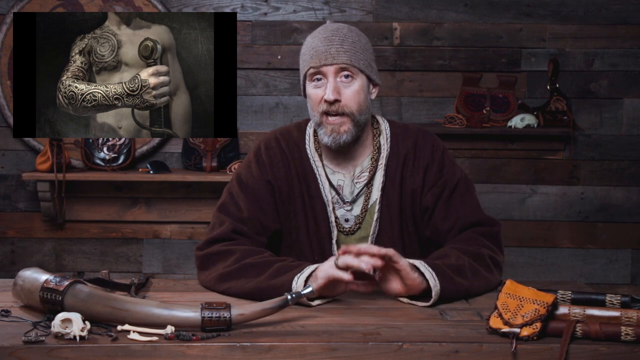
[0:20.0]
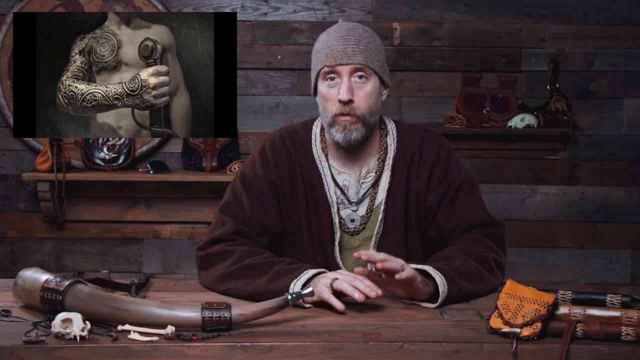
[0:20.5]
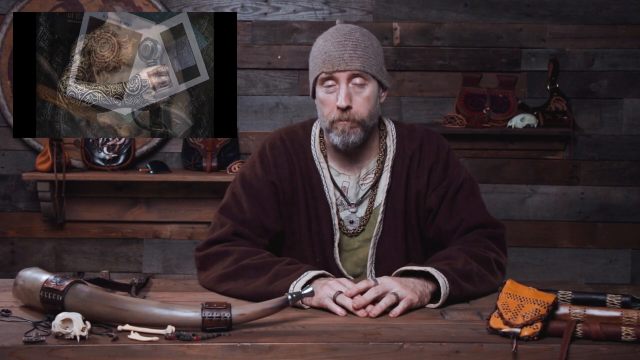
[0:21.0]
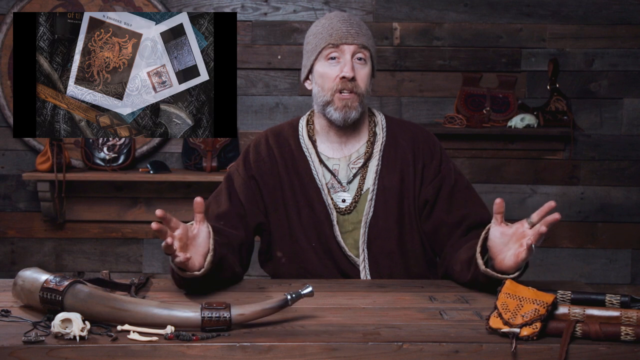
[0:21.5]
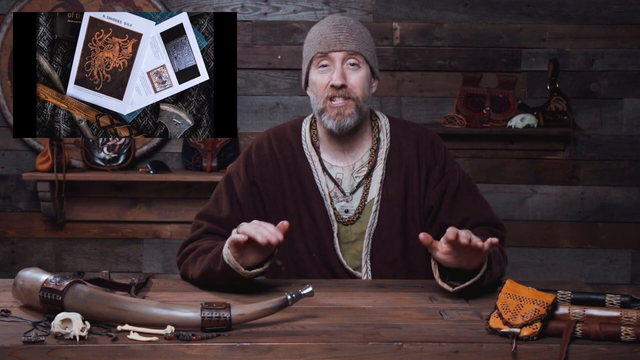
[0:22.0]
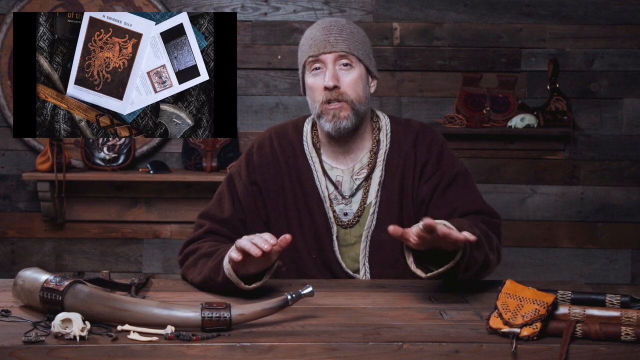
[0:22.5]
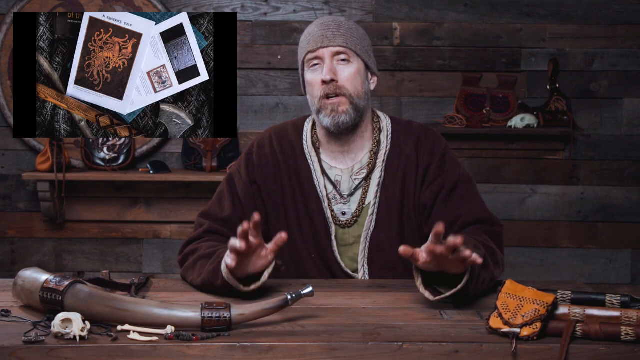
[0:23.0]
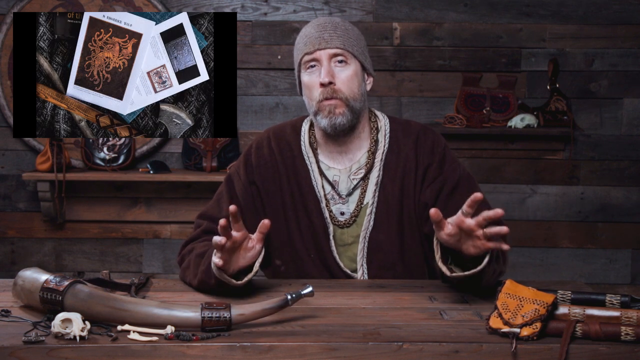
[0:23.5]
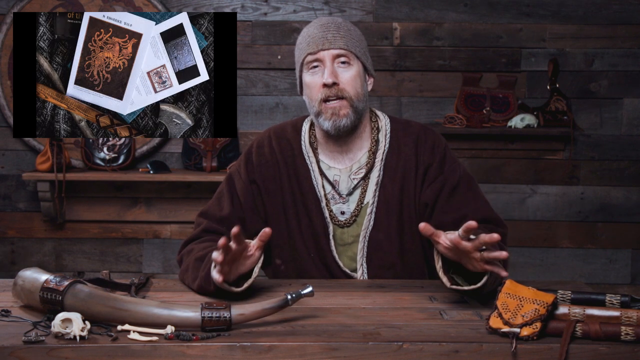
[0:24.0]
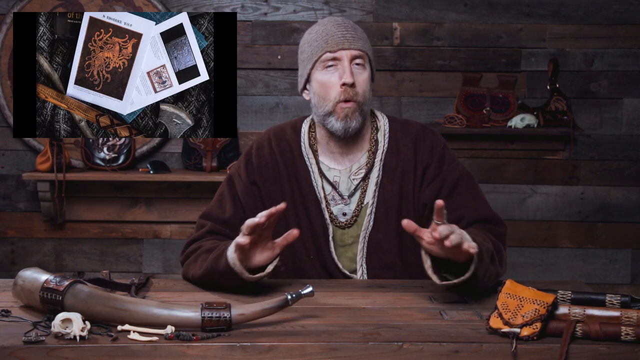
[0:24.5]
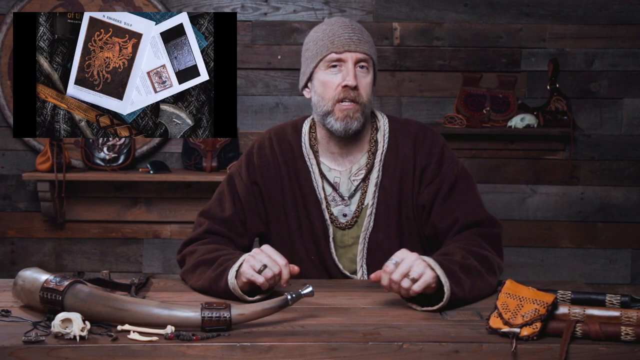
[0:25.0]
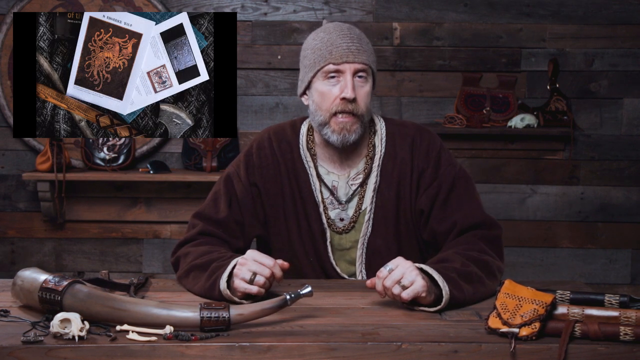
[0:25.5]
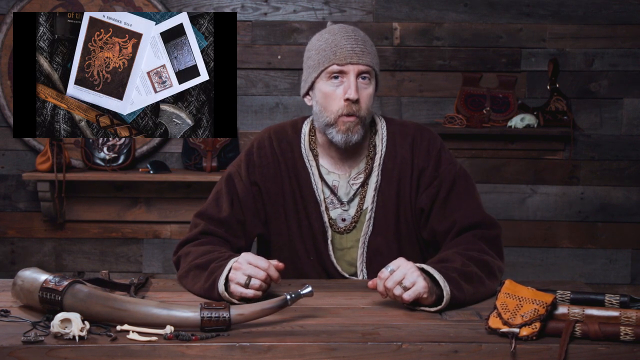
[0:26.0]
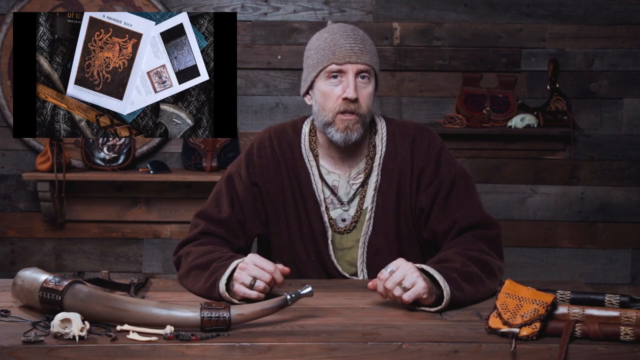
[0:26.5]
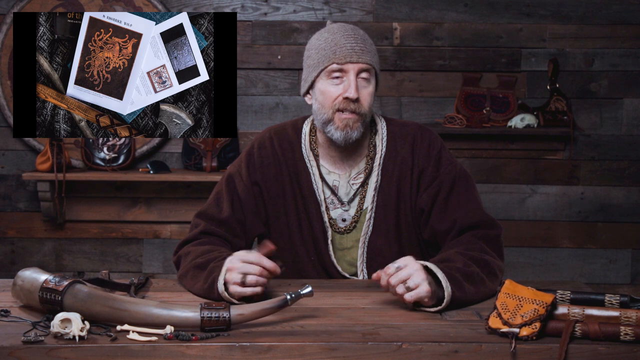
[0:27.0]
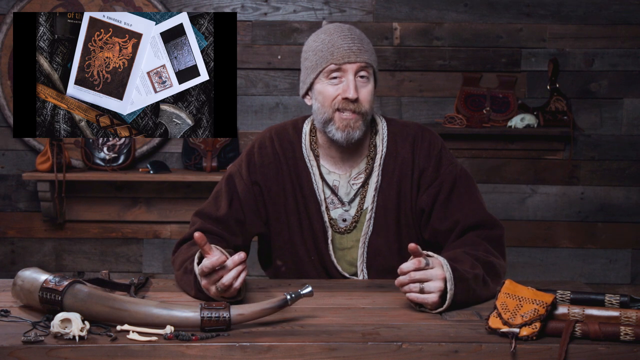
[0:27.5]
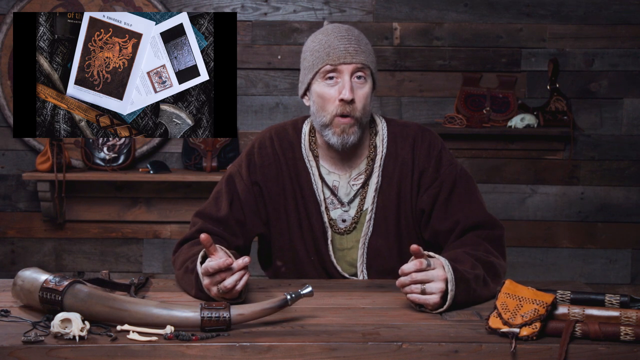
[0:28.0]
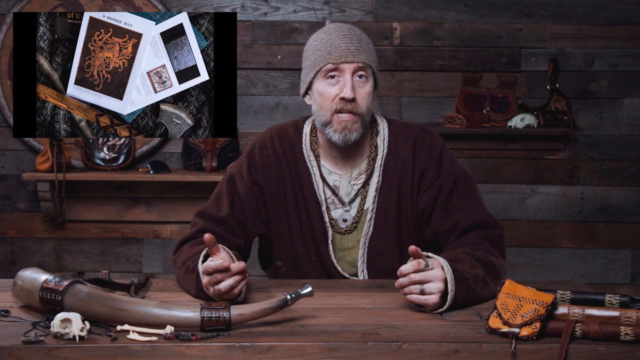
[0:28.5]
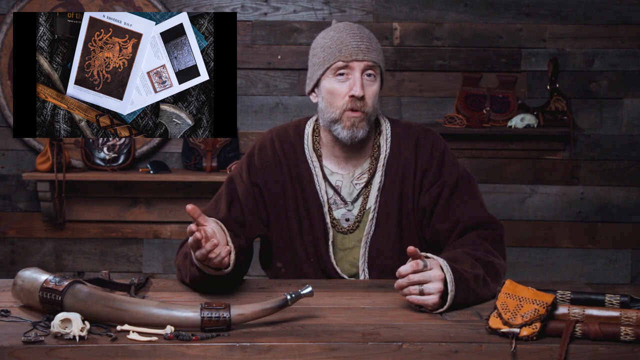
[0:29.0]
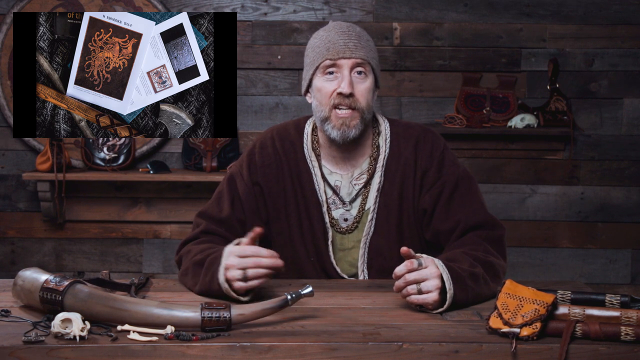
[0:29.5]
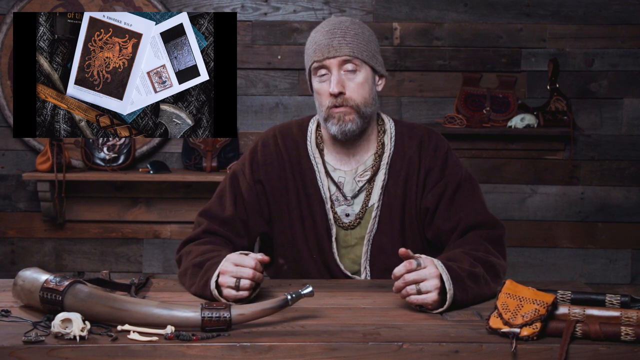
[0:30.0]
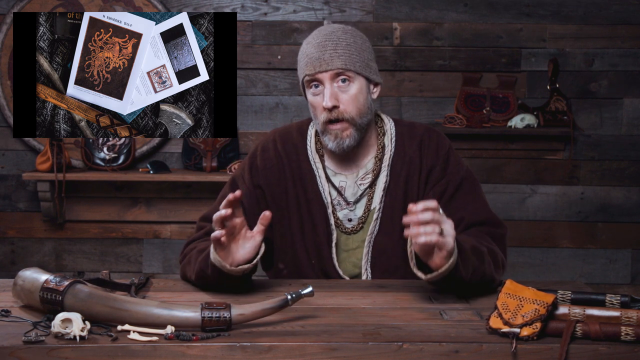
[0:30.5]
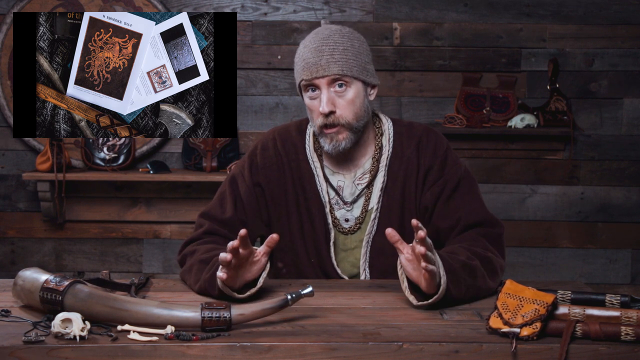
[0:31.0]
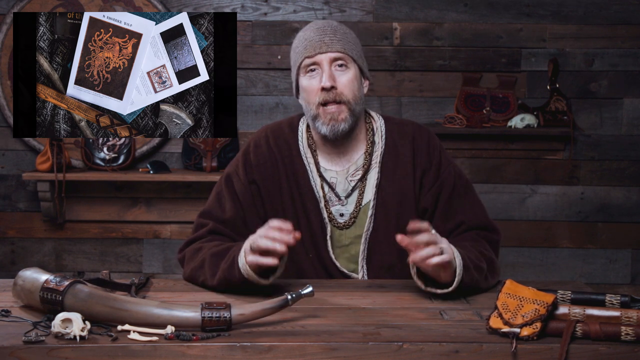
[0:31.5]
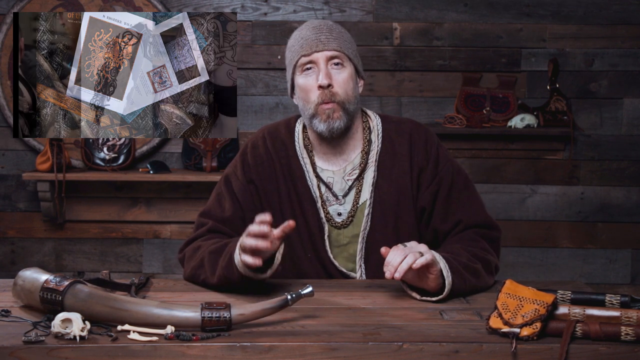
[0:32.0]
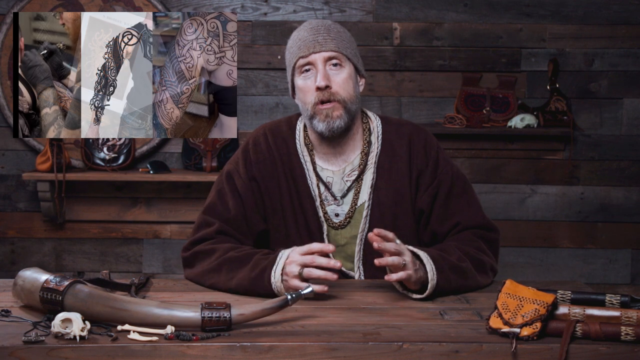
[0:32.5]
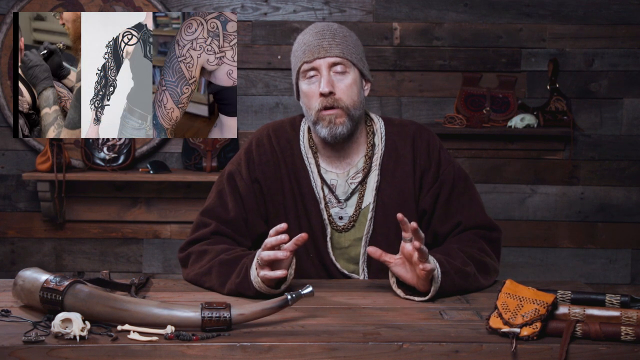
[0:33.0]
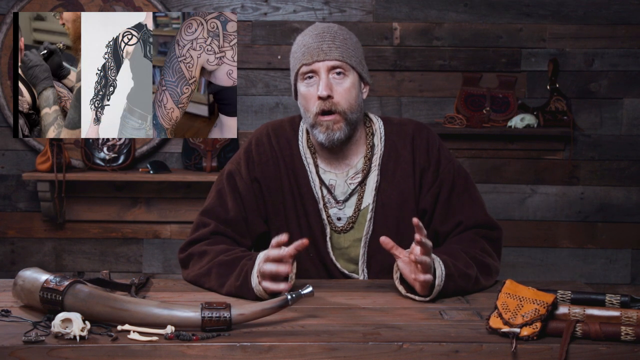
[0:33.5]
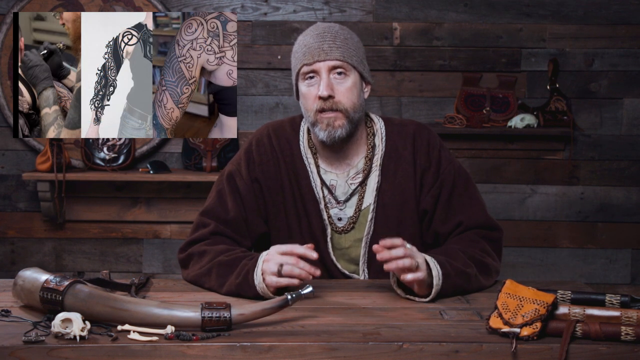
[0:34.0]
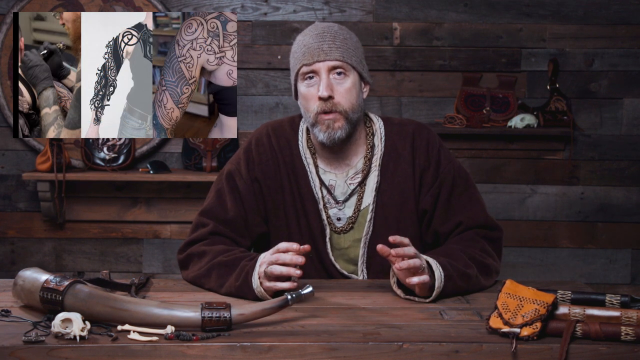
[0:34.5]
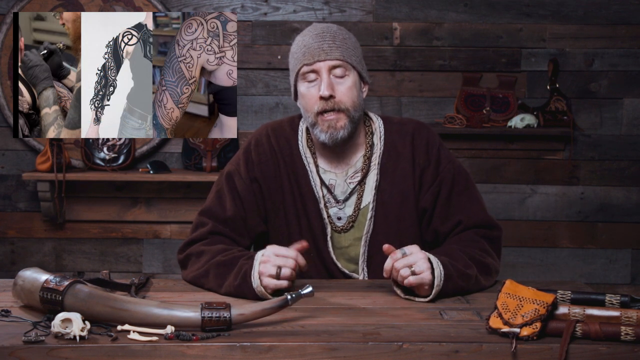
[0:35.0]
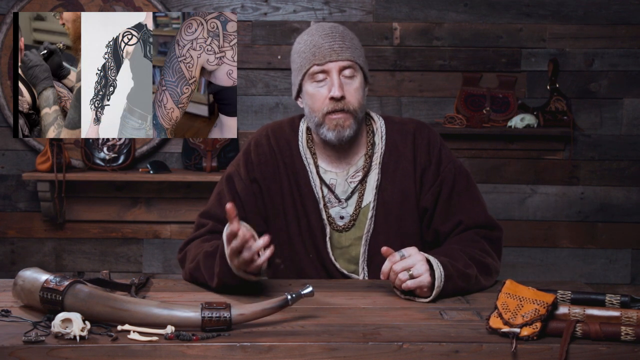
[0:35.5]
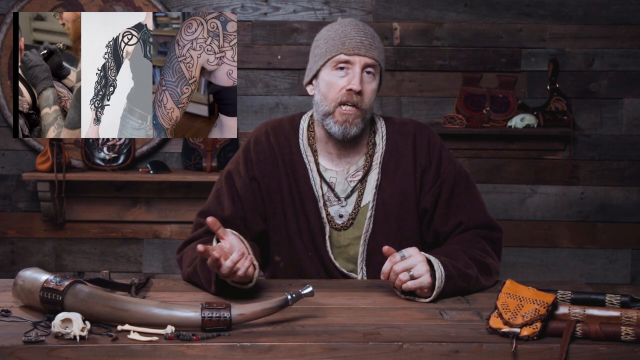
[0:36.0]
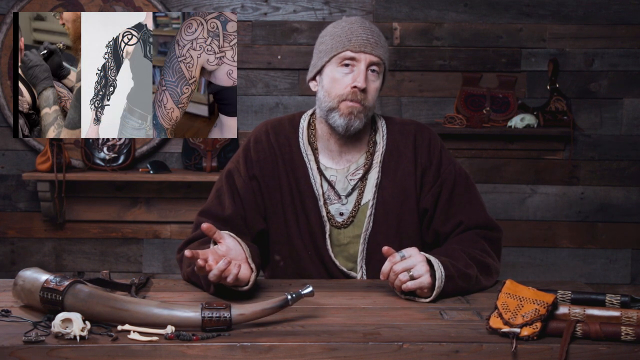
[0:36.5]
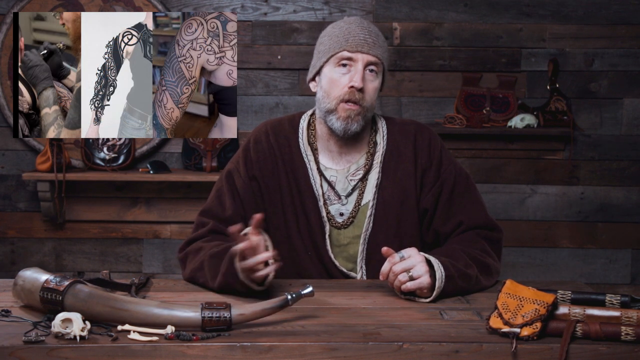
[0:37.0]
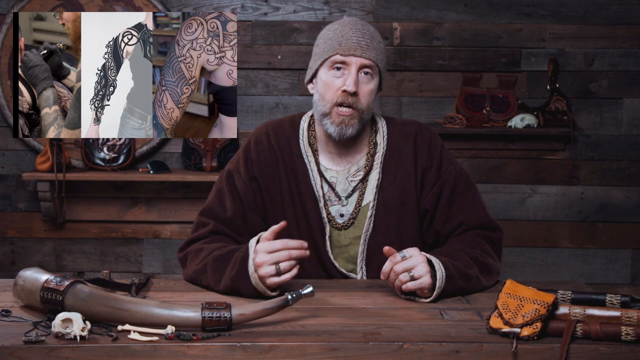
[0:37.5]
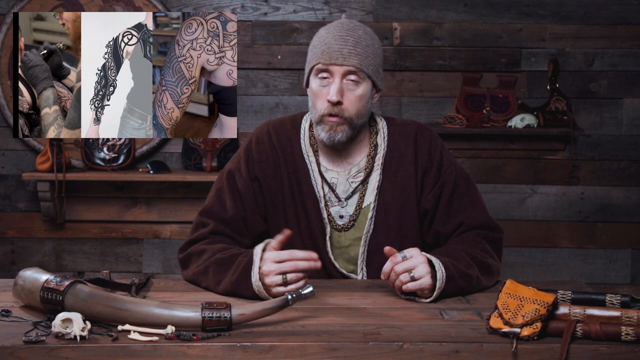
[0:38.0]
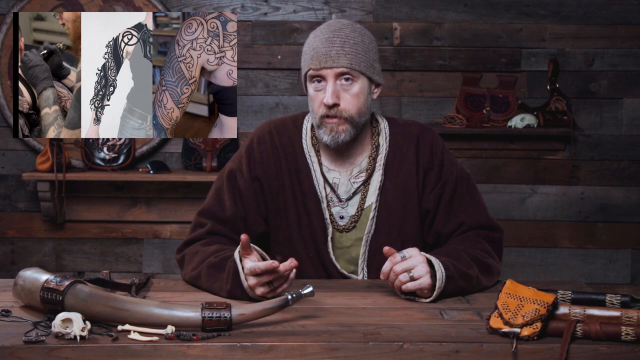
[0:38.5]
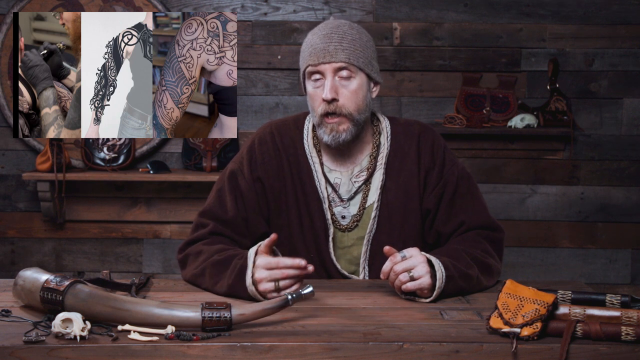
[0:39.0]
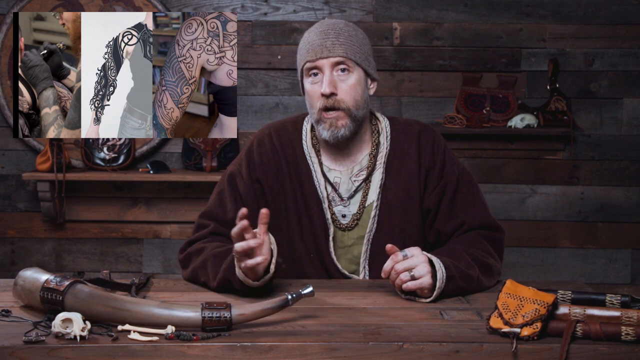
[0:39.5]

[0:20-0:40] A man is in front of a wooden desk with cultural historical items on it to his right and left. He wears what is sort of, almost, a maroon robe, a very large necklace and a pink beanie, and has a grey beard and a moustache. The wall behind him is made of planks of wood, with two shelves, one on either side of him, holding more historical items with some sort of European historical patterns, Nordic or maybe Gaelic. An image in the top left of the screen shows a drawing of a shirtless man with a tattoo on his right shoulder and arm, holding a sword in his hand. The man looking at the camera occasionally moves his hands up and down, putting them back down on the desk, and turns his head slightly to the right. The image in the top left corner changes from the tattoo to some other documents, including a picture of a dragon, one of them orange. It then goes back to tattoo images: a tattoo artist applying a tattoo, and a picture of a man's shoulder from behind showing an intricate tattoo pattern.